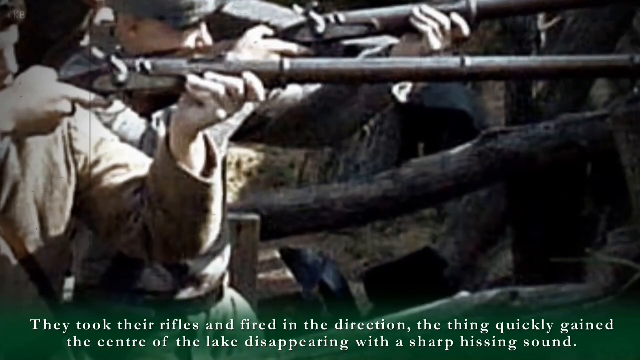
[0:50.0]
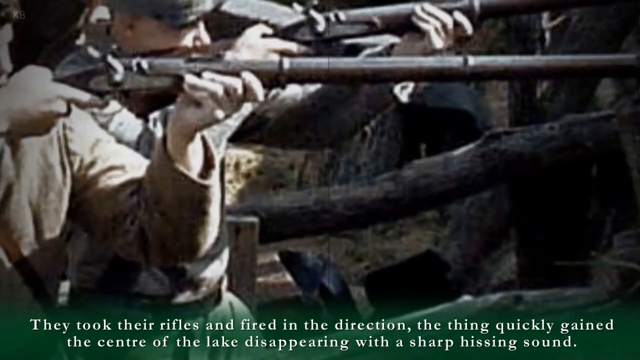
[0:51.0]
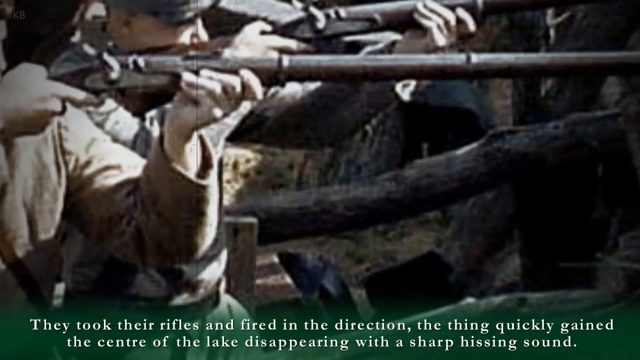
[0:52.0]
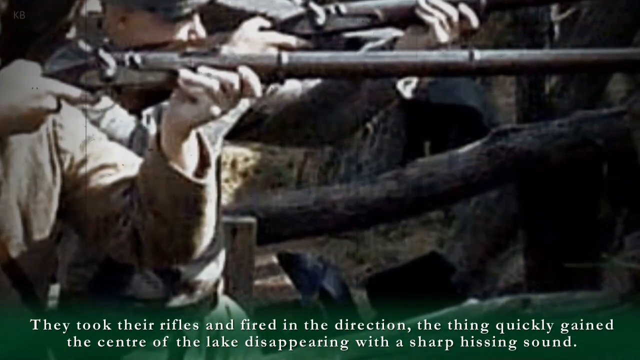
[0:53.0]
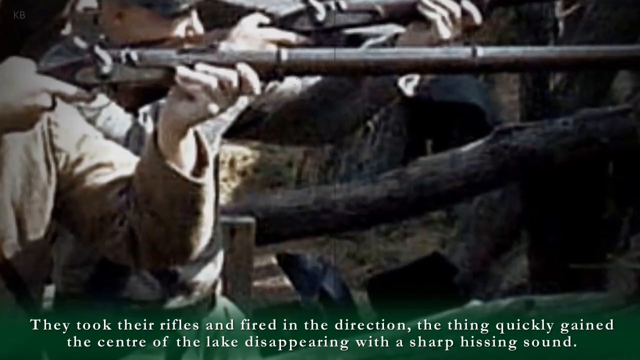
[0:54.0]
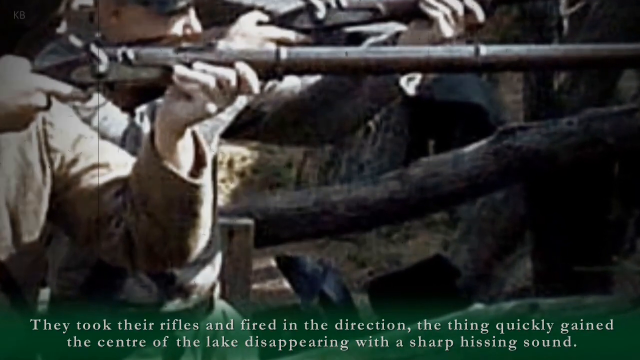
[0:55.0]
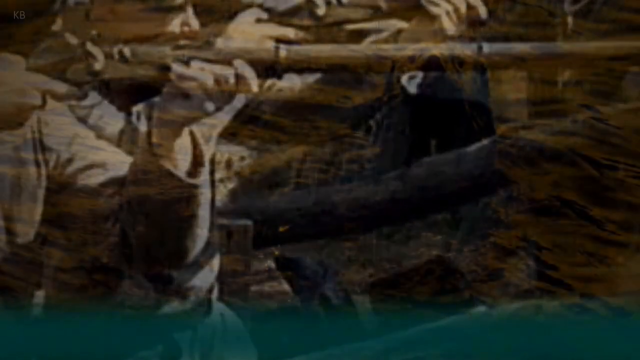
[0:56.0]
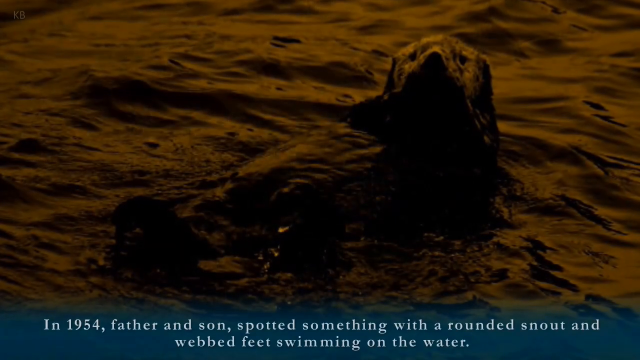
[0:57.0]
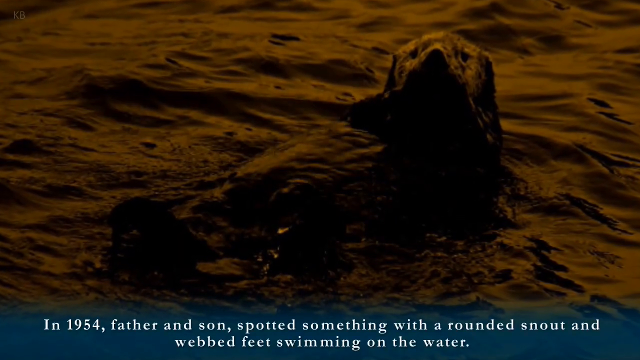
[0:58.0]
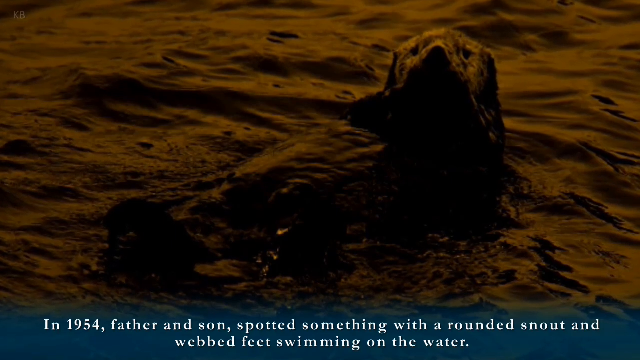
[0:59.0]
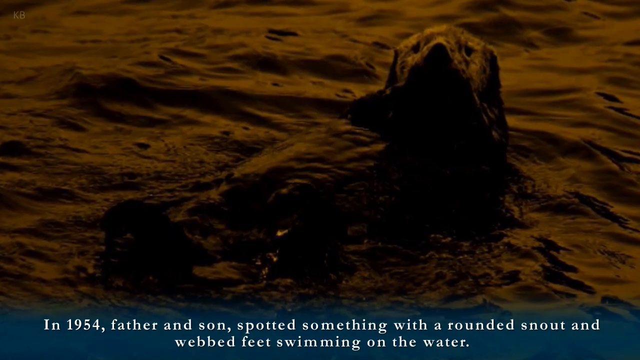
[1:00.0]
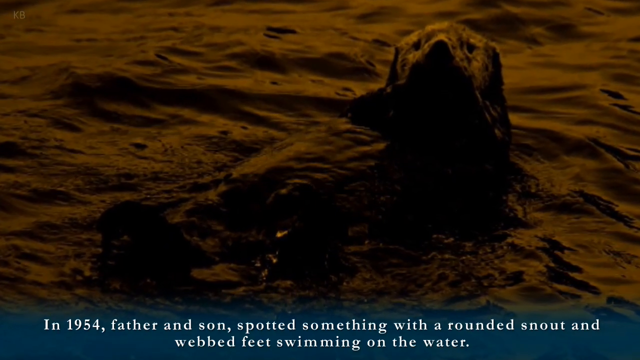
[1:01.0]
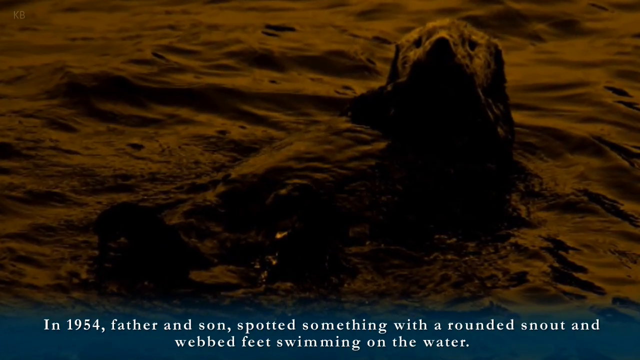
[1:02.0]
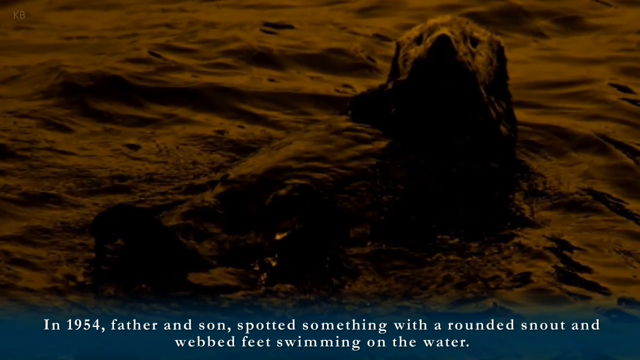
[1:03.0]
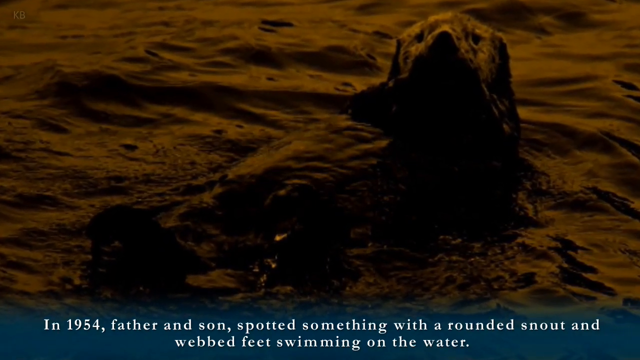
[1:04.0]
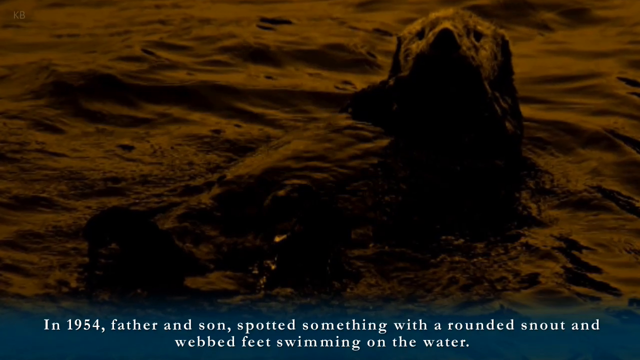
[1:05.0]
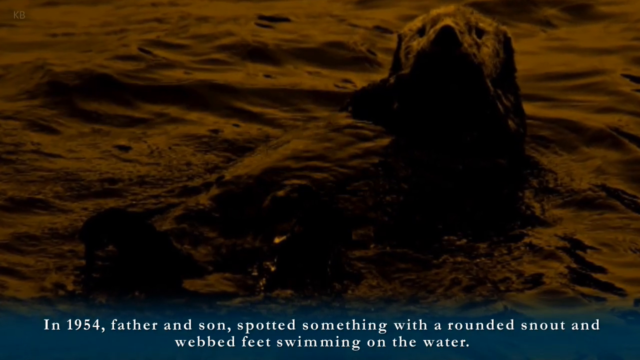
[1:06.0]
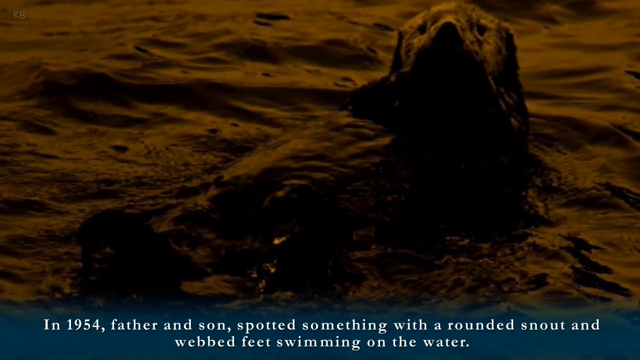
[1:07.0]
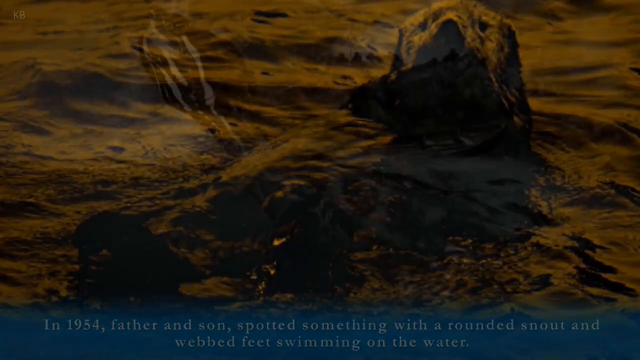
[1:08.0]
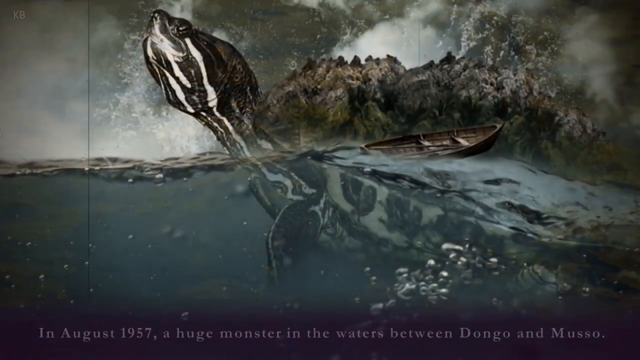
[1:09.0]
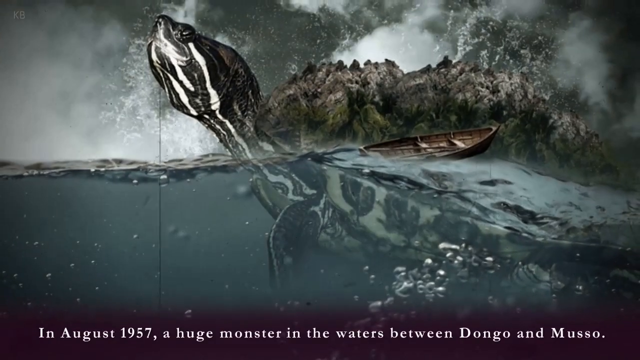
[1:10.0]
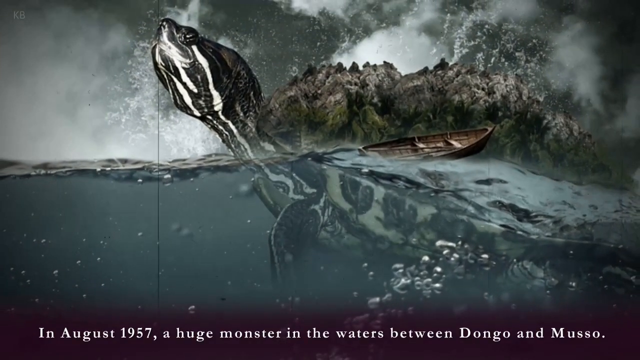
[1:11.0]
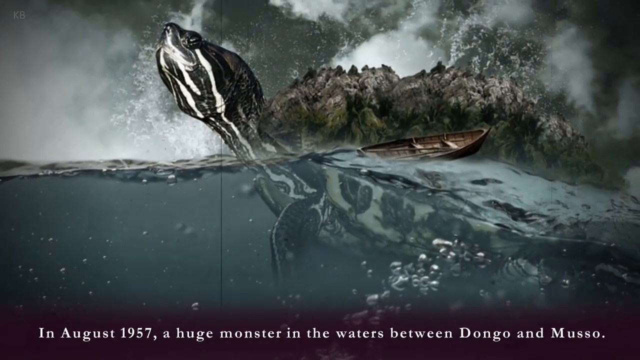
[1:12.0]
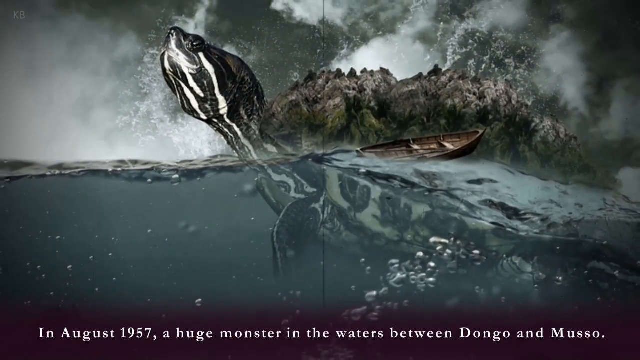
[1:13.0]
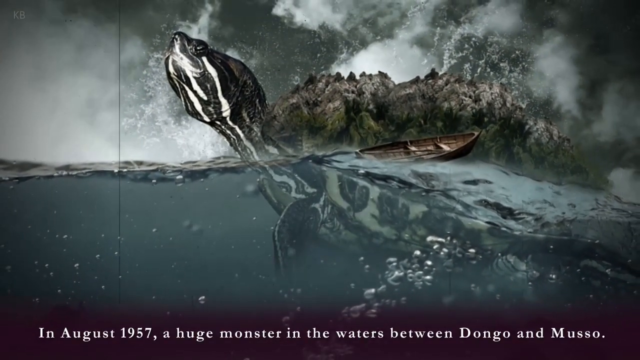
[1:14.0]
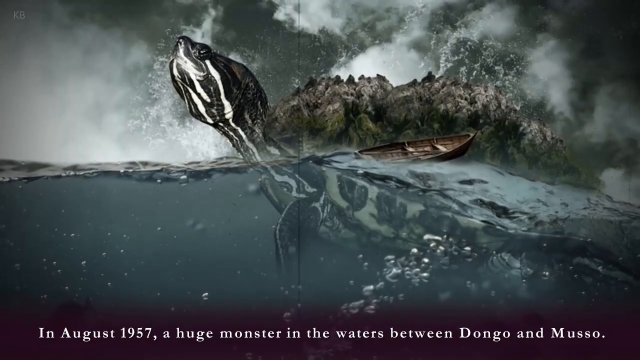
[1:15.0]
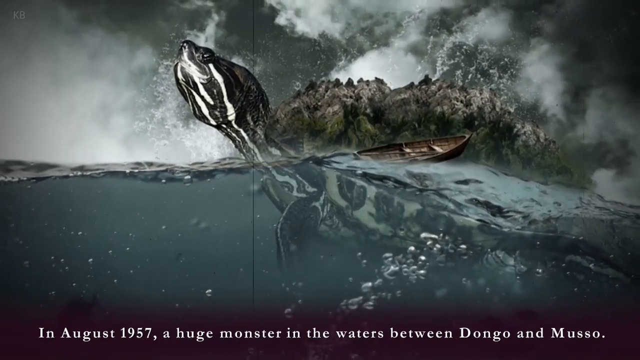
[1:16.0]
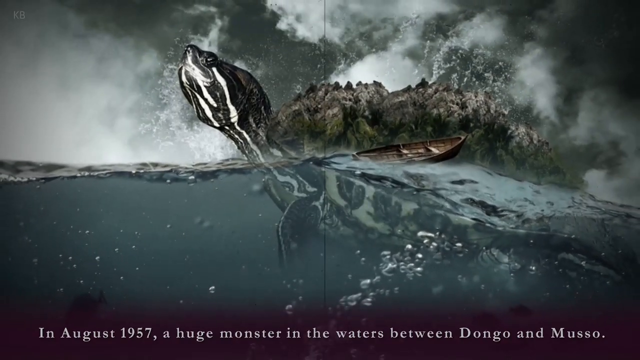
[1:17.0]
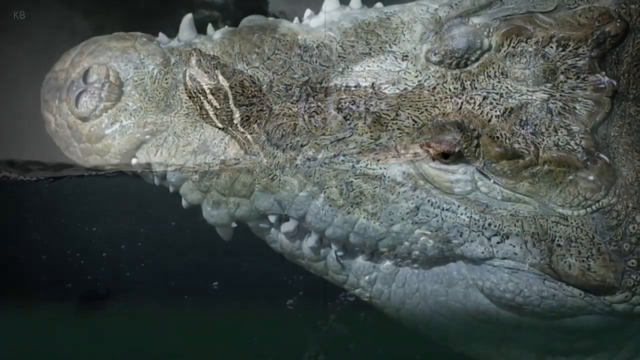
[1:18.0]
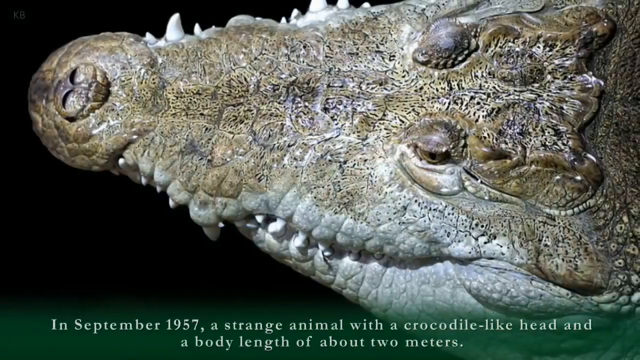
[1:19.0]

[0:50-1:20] On-screen text reads "In 1954, father and son spotted something with a rounded snout and webbed feet swimming in the water" and then "In August 1957, a huge monster in the waters between Danga and Musa." Text identifying "Lake Como, Italy" as a glacious lake and one of the deepest lakes in Europe also appears.